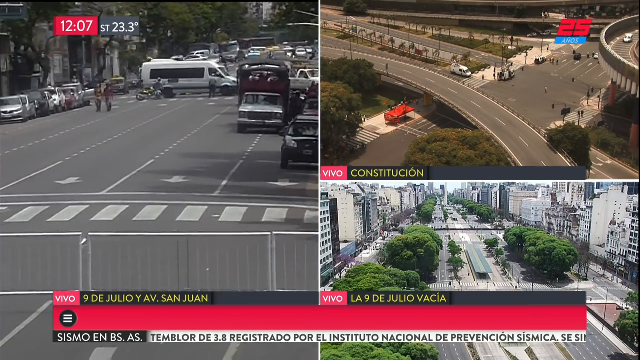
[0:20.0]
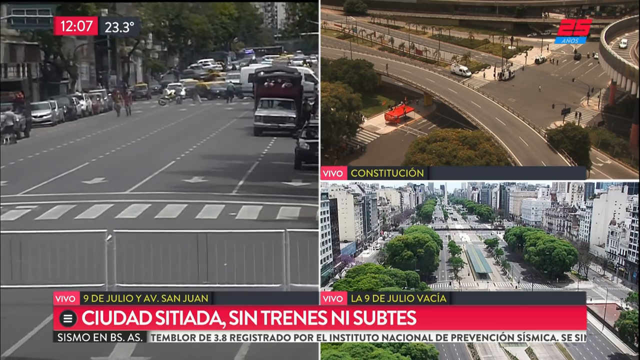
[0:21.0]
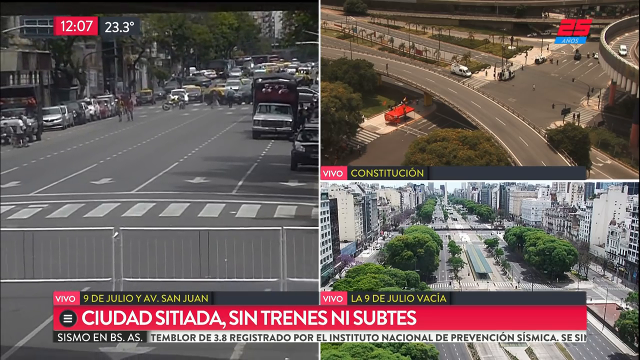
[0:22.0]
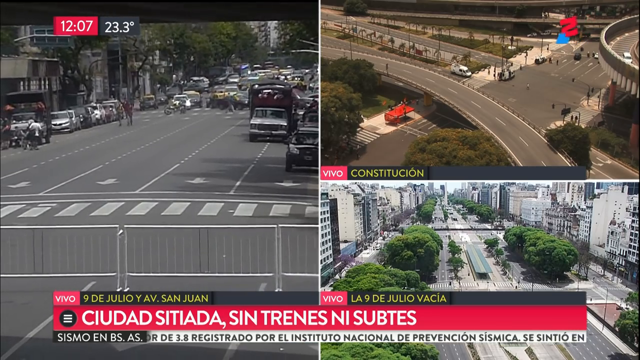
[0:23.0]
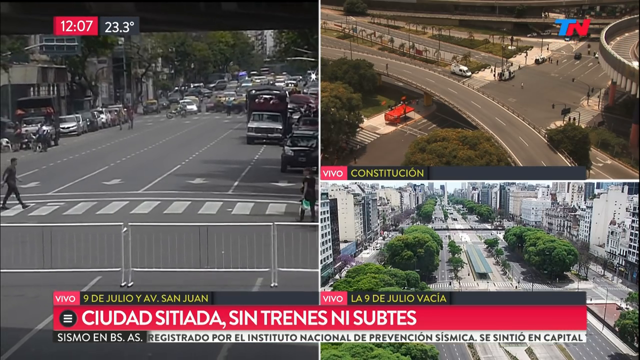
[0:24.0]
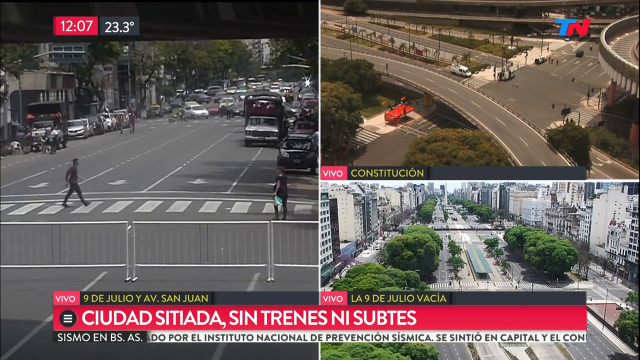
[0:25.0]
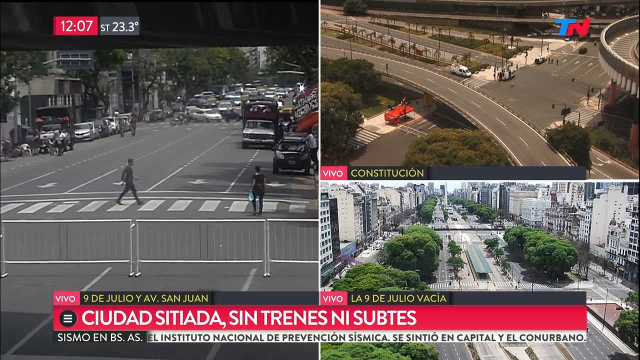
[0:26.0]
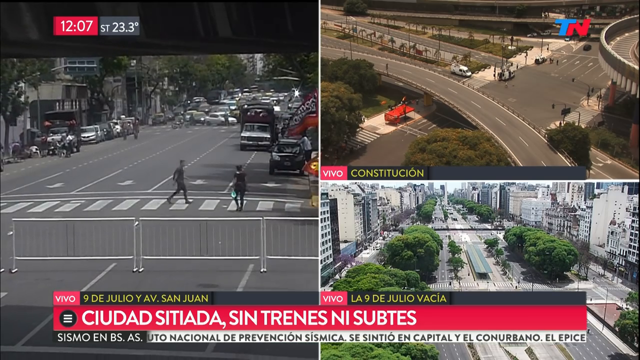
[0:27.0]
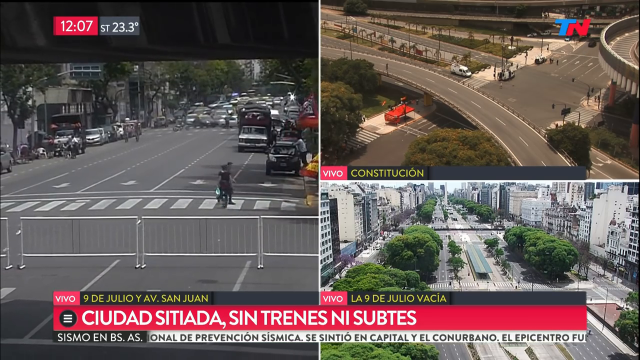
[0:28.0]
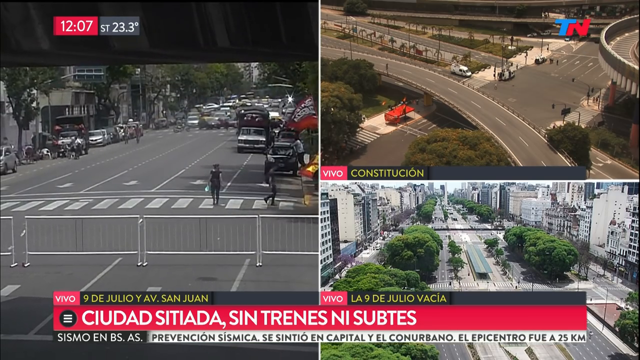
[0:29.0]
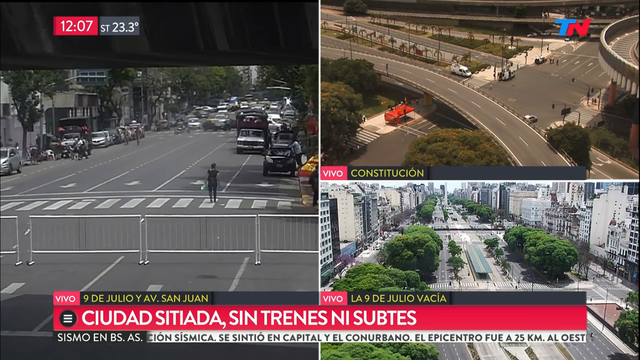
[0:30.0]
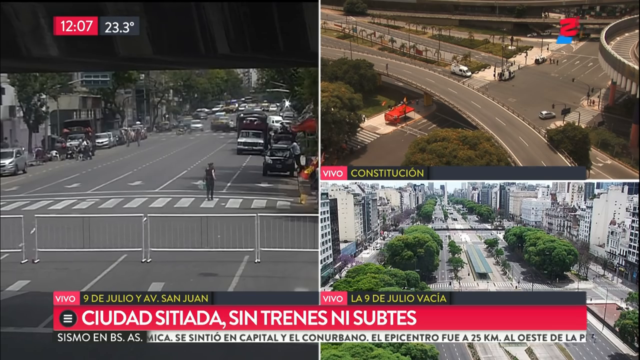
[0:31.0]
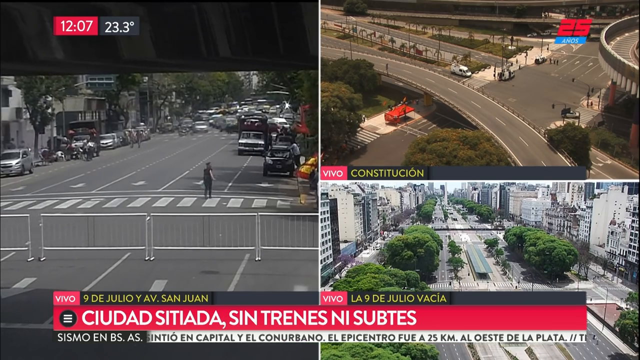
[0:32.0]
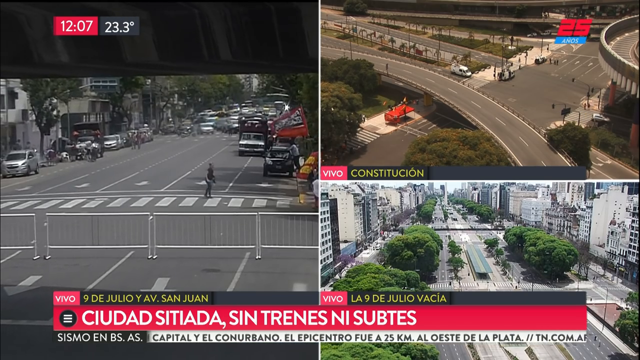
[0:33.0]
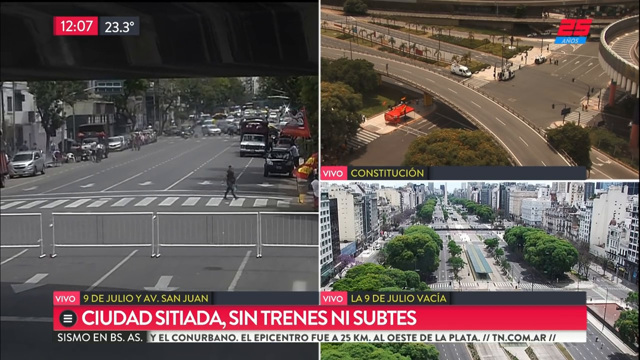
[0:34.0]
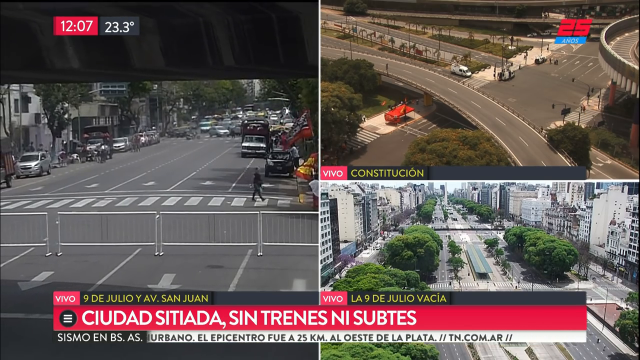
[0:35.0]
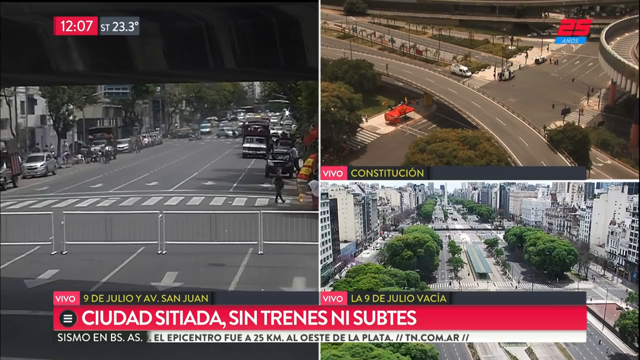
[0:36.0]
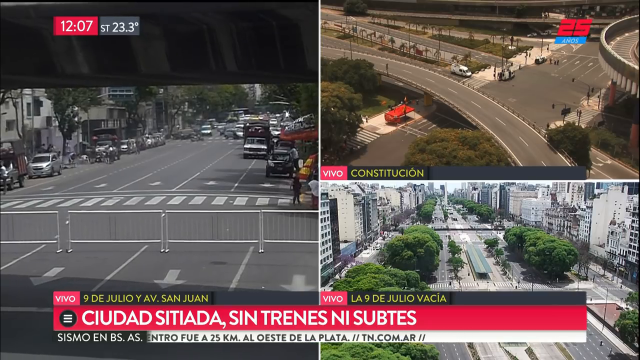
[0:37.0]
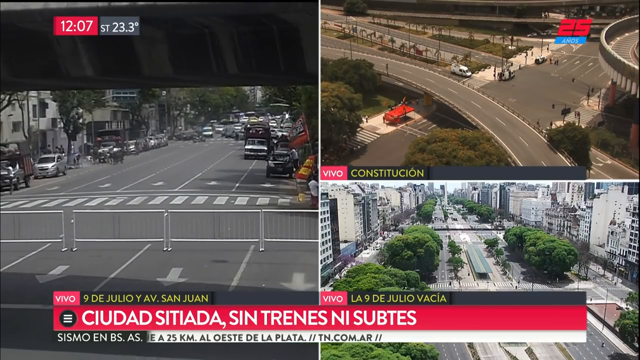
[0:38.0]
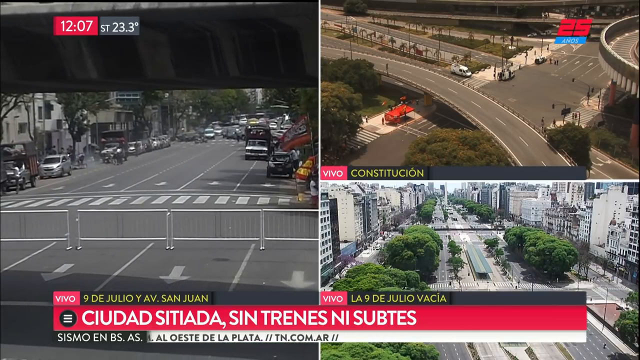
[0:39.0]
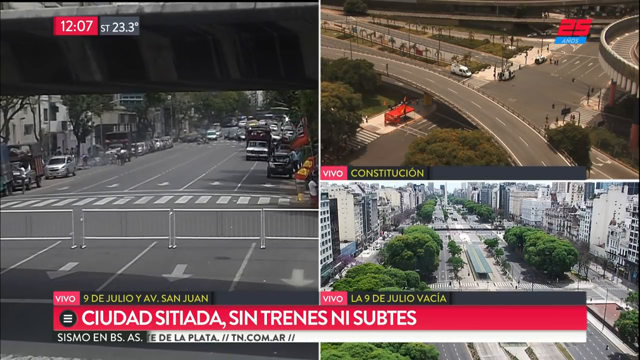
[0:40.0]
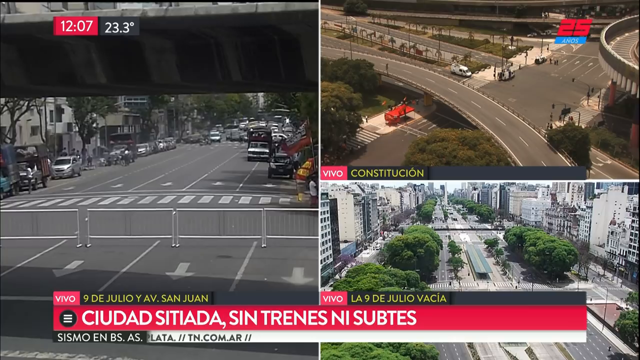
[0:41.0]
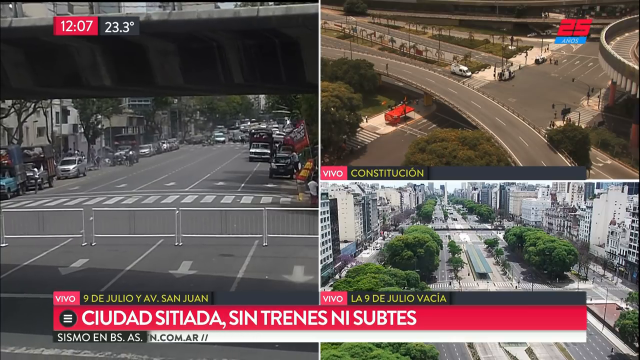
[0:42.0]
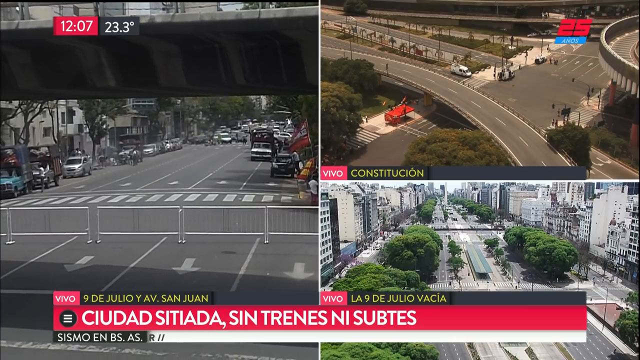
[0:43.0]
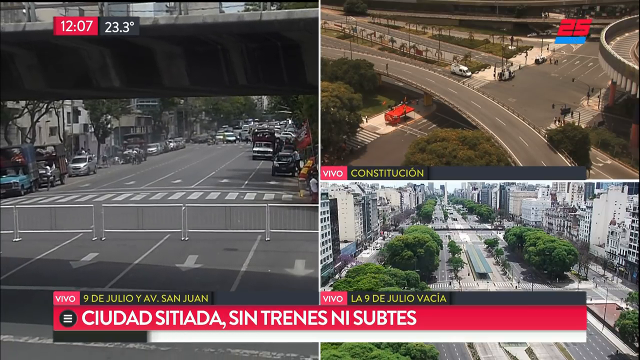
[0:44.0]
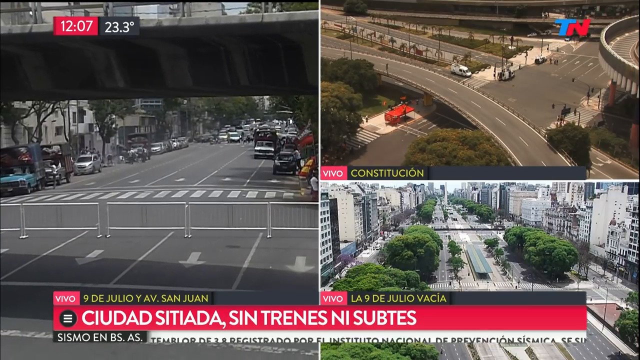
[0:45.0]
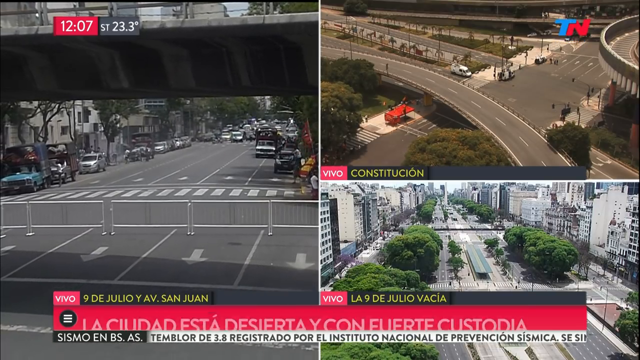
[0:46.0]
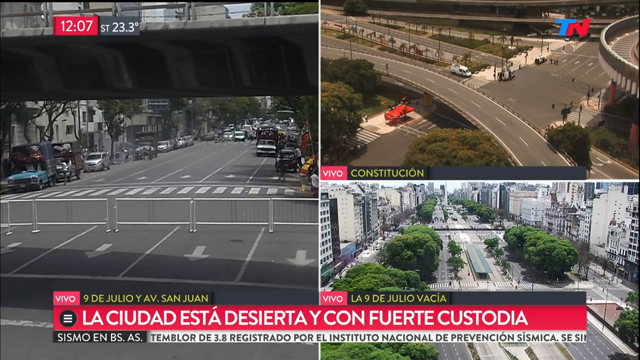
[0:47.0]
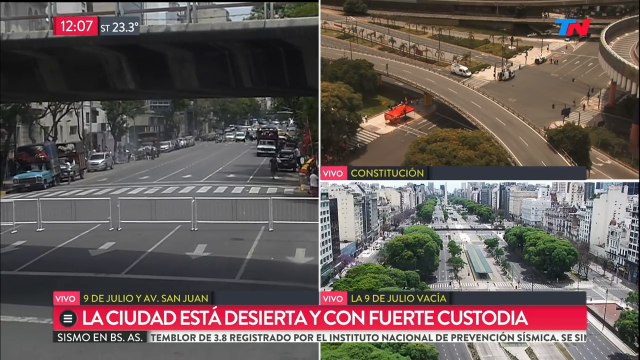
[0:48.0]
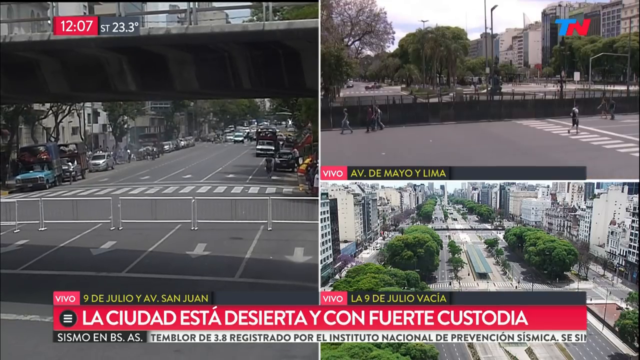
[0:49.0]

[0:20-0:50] The left image pans out to show more of the traffic being diverted, with people on the ground walking. Arrows on the street point toward the viewer, and a crosswalk runs sideways with nobody in it. Behind it, people are trying to direct traffic. The two images on the right show the same views, with traffic still looking pretty good in both. A red rectangle at the bottom appears to say "vivo," possibly indicating it is live. The left image pans out further to show gates in front of the crosswalk and more arrows pointing toward the viewer. The top right image then gets a close-up of people walking back and forth.